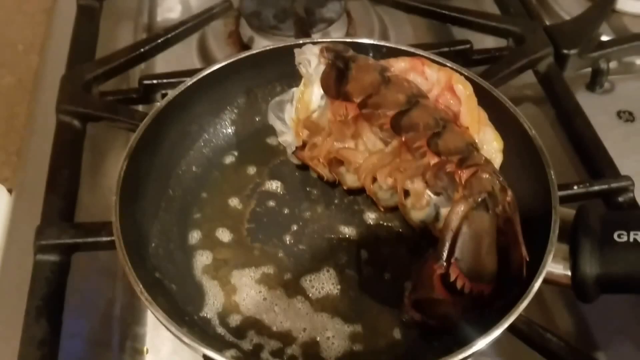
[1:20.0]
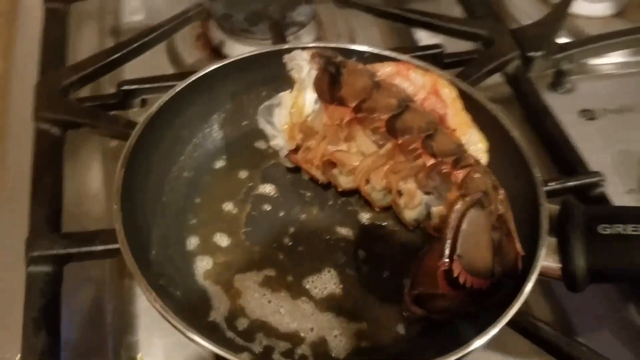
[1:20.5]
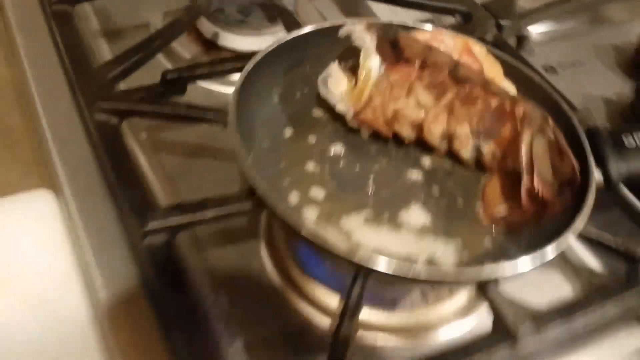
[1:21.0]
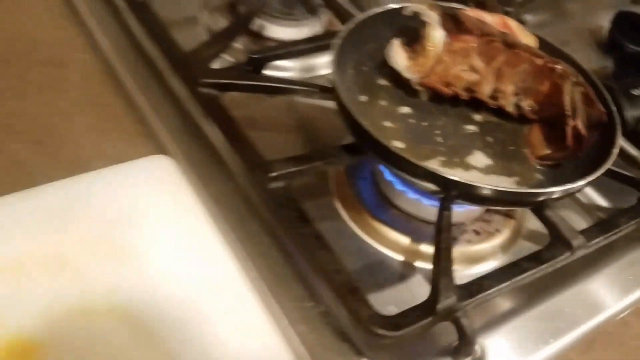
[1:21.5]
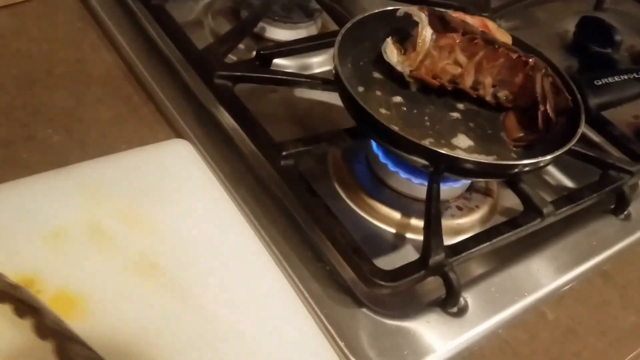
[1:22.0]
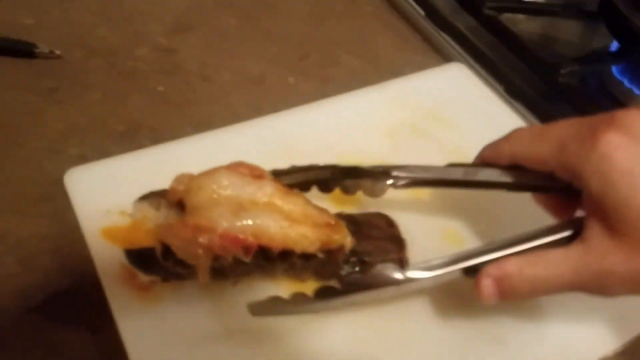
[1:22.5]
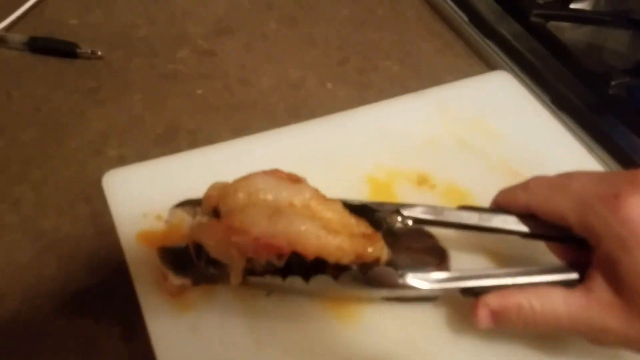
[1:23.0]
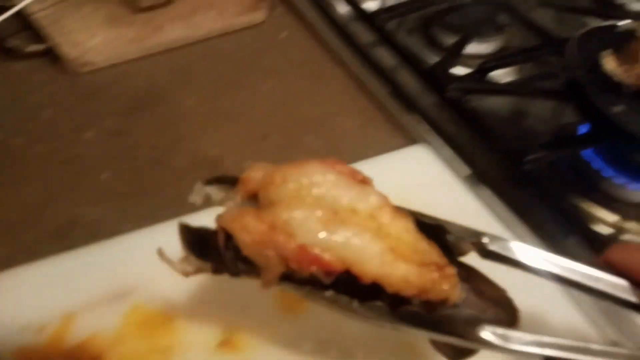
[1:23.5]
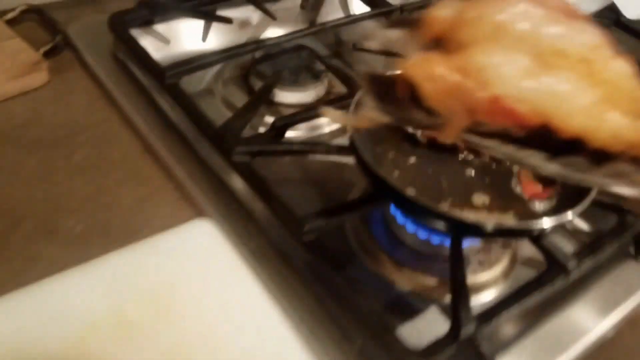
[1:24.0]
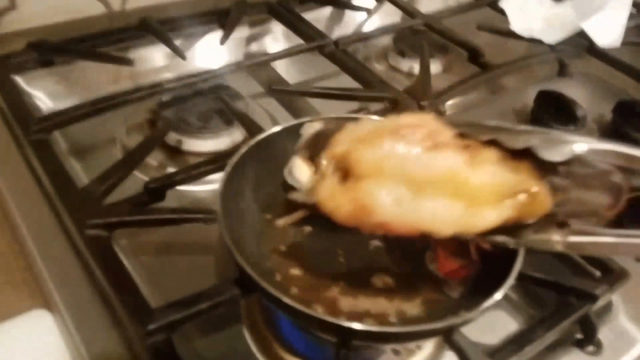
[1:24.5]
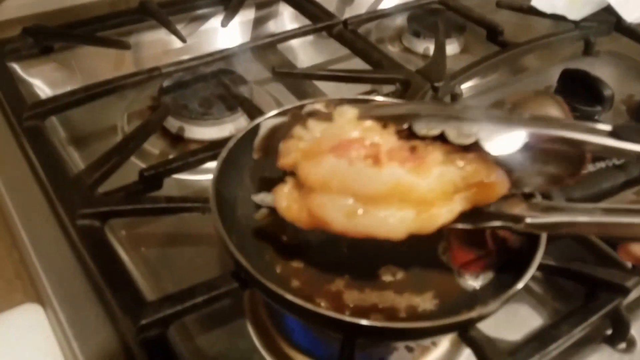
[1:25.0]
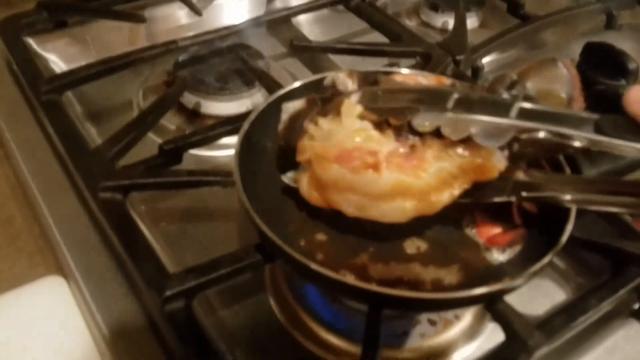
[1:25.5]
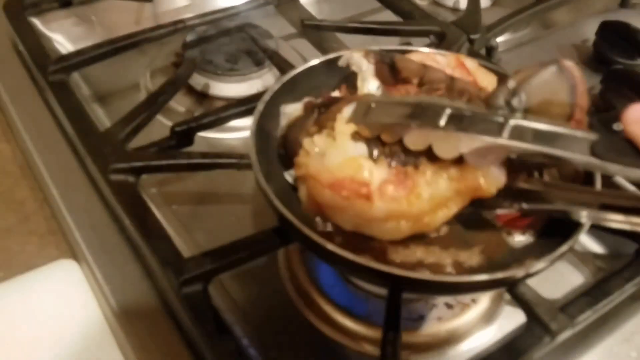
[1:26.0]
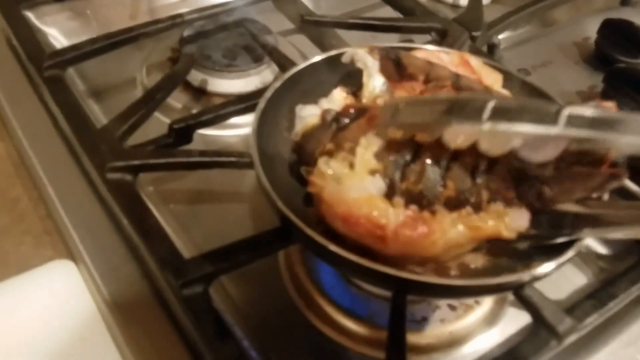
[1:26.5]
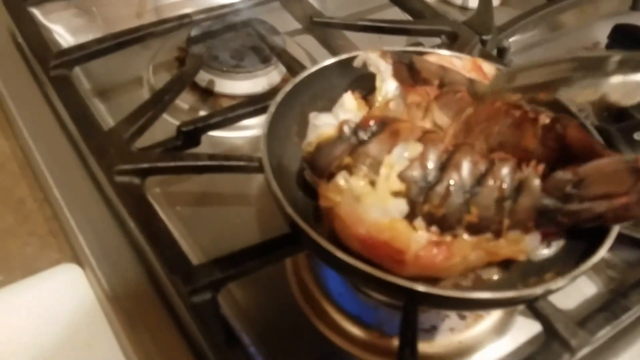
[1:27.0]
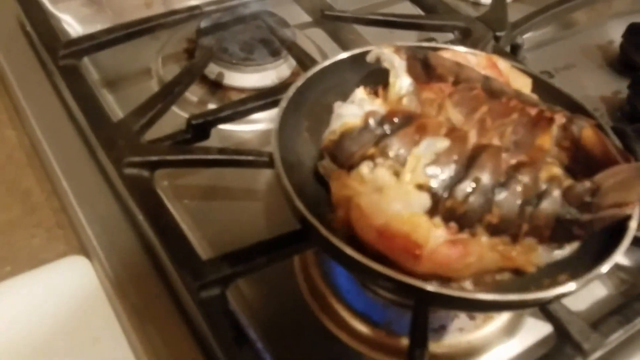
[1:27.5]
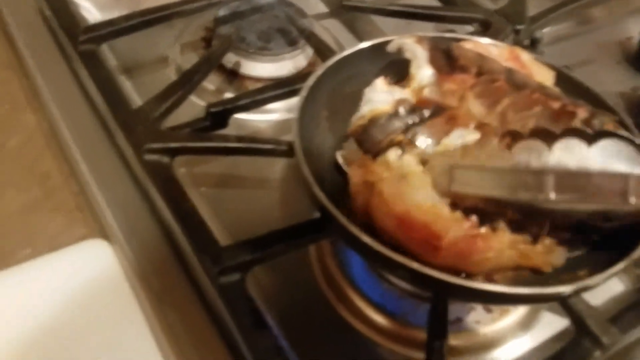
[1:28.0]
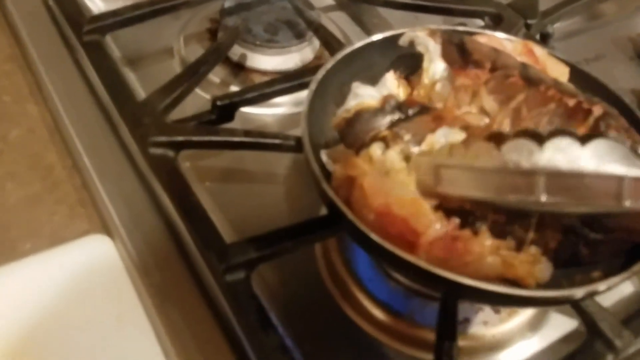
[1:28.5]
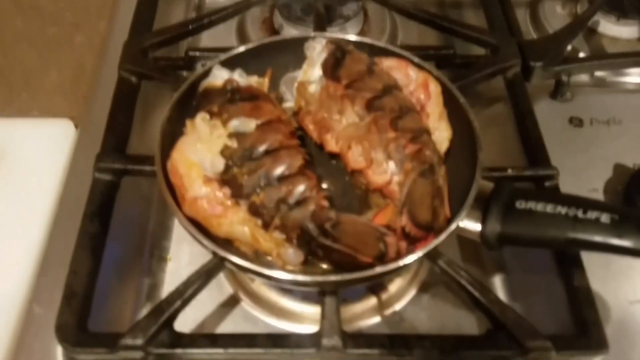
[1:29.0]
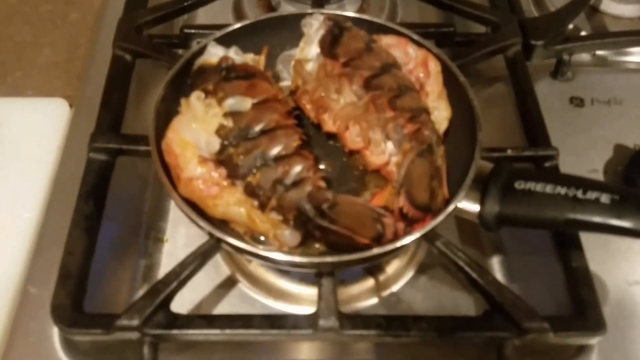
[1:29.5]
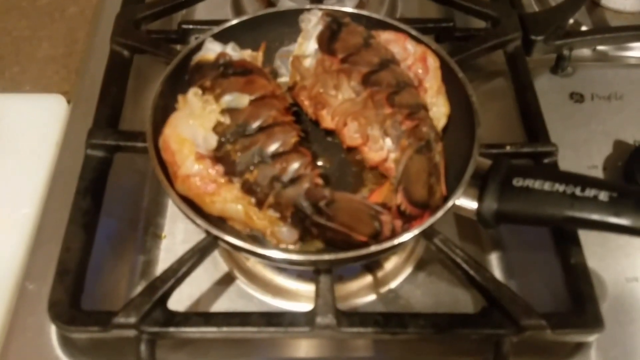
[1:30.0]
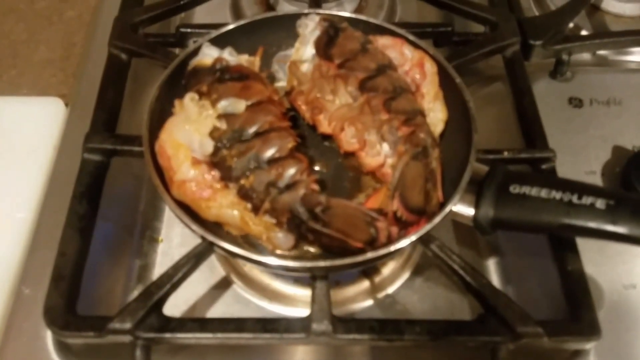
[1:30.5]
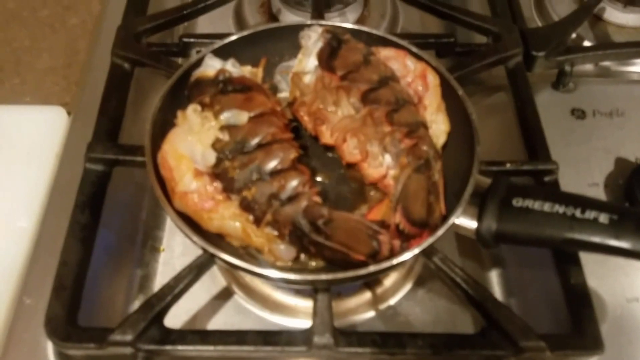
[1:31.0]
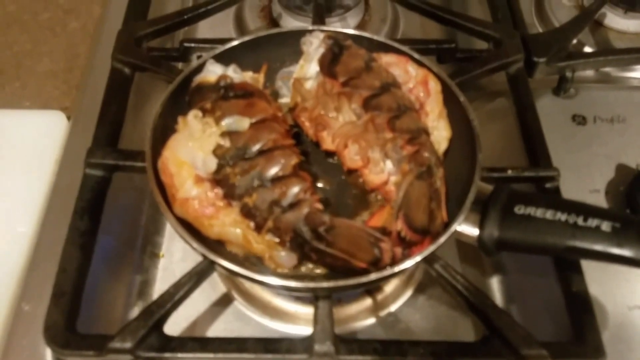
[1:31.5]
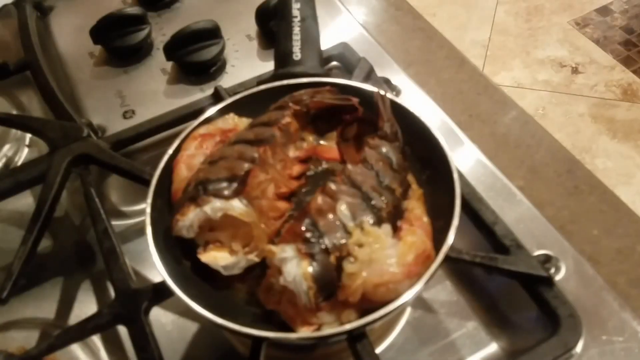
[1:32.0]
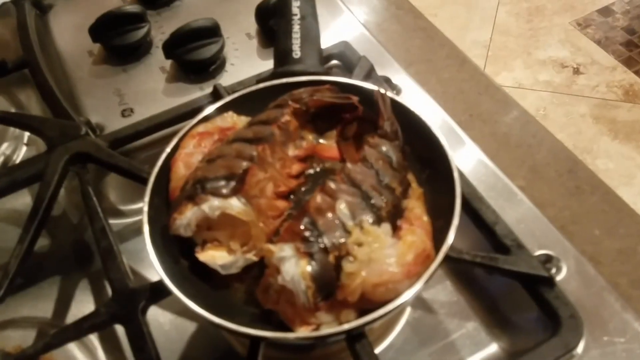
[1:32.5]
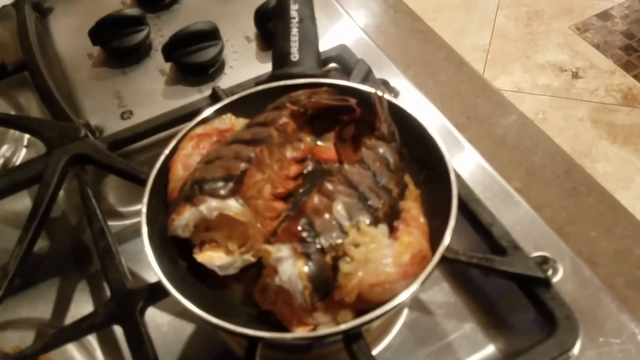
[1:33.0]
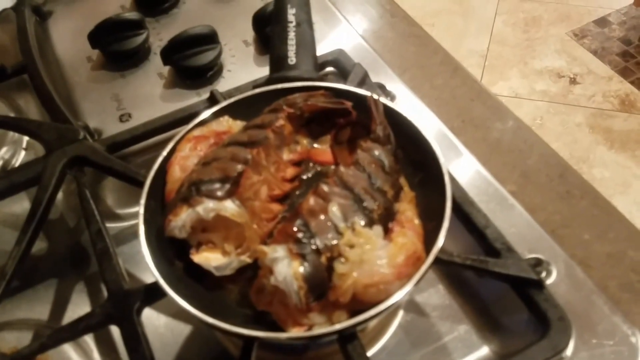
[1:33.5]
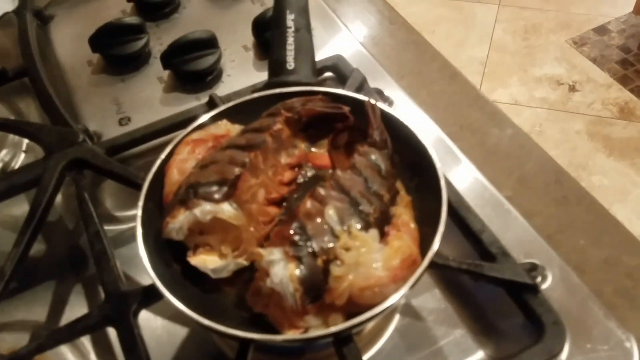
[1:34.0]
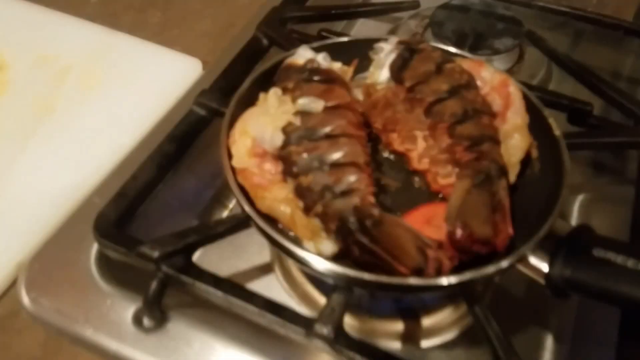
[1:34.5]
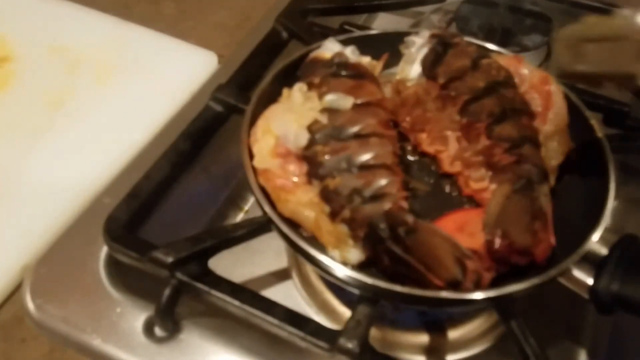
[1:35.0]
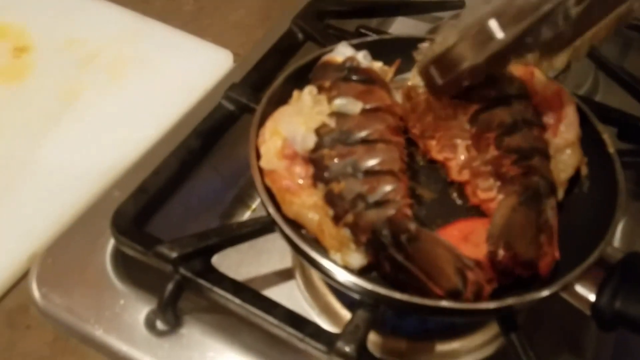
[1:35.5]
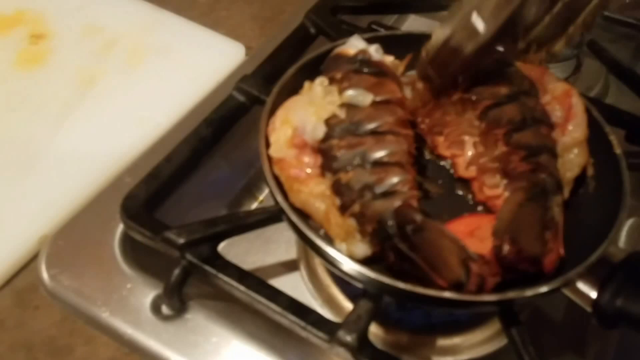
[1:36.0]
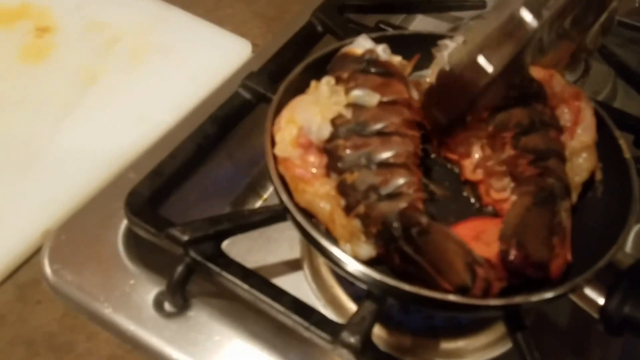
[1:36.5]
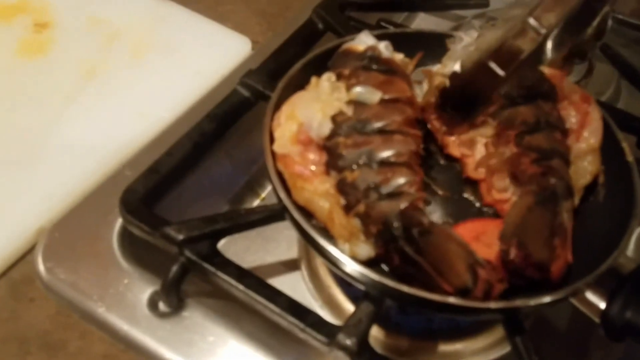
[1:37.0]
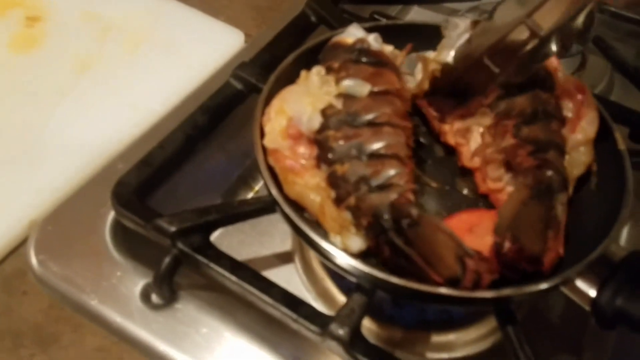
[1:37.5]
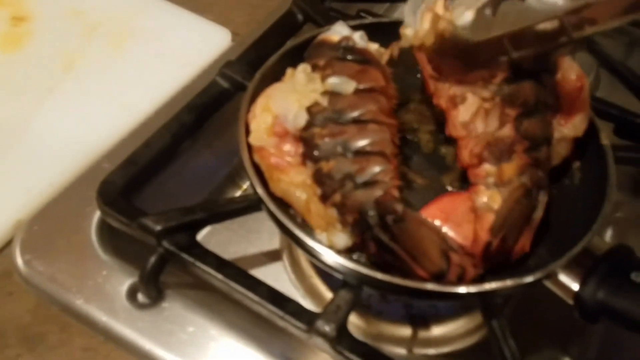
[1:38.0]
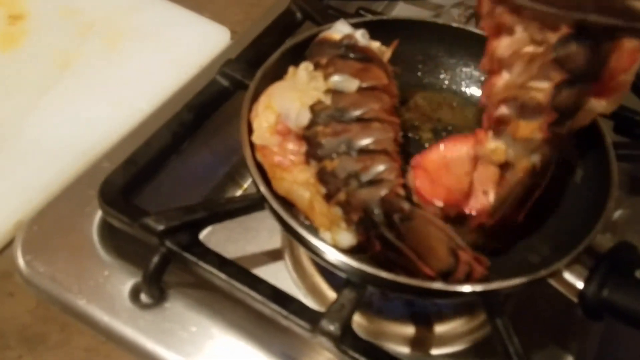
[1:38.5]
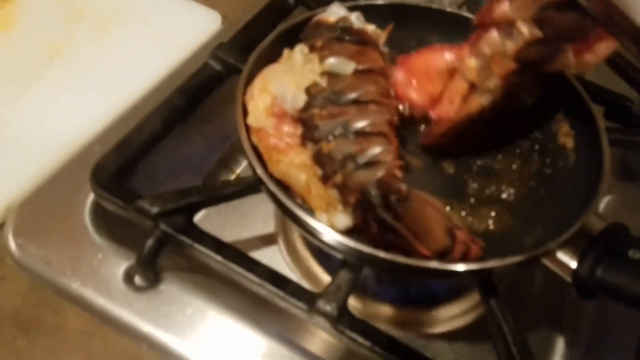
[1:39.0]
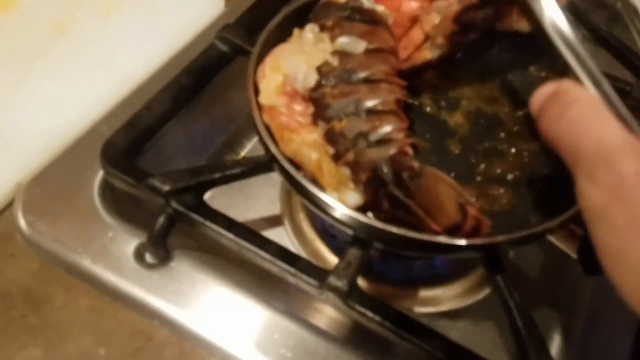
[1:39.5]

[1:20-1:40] From a top view, a stove with a blue flame underneath holds a round pan with a handle. In it is a buttery lobster tail that is starting to cook. A hand carrying tongs picks up a second tail from a white square plate and places it next to the other tail in the pan, meat side down. The angle continues to change, and the lobster tails are seen cooking from an aerial view. Butter bubbles underneath the lobsters, and a pair of tongs flips the lobster tails upside down as they continue to cook. The butter keeps bubbling underneath the two tails in the circular black pan with a handle and "green life" written on it. The tails continue to cook in the bubbly butter until they are cooked through.